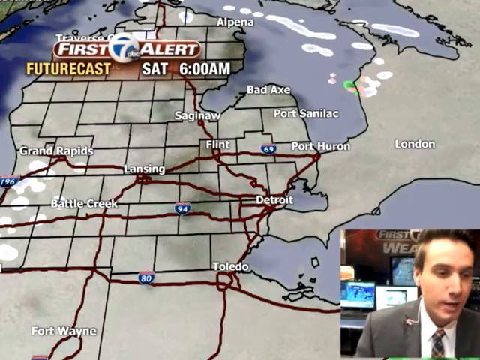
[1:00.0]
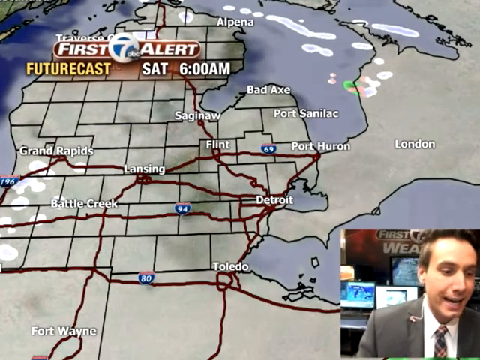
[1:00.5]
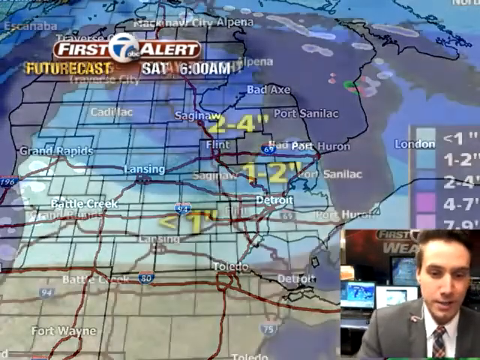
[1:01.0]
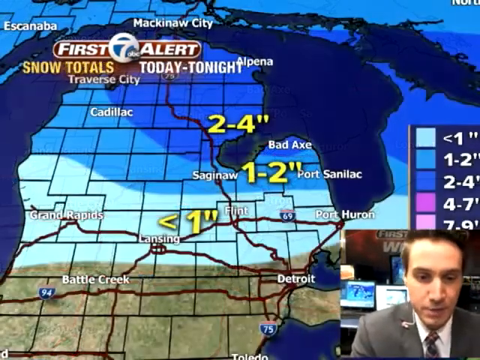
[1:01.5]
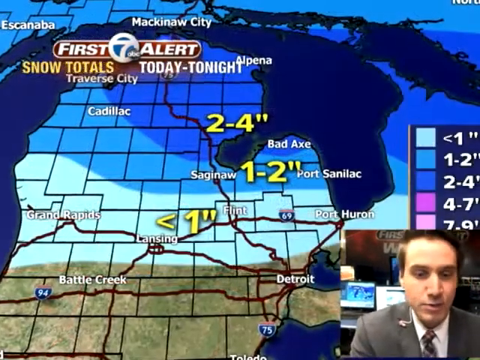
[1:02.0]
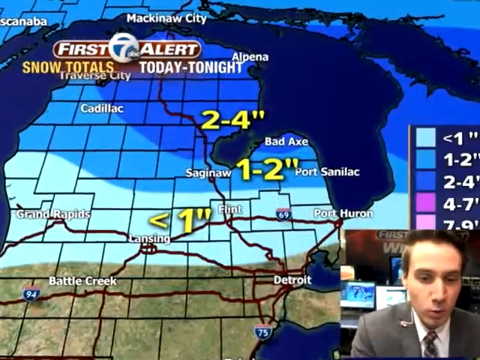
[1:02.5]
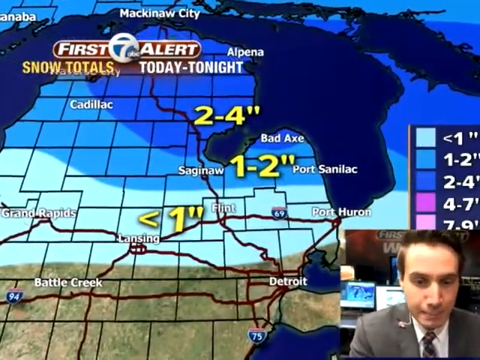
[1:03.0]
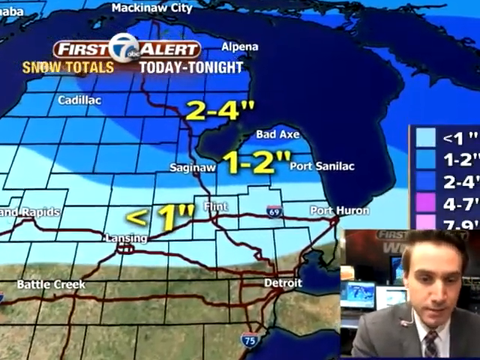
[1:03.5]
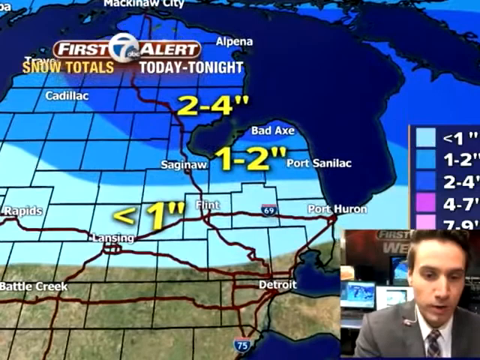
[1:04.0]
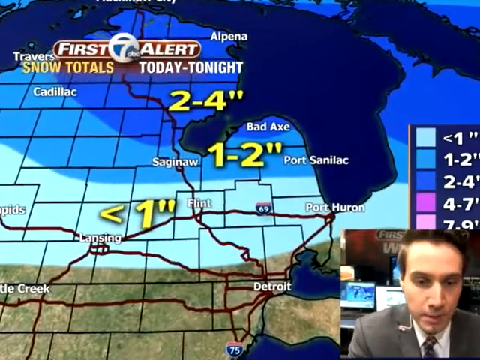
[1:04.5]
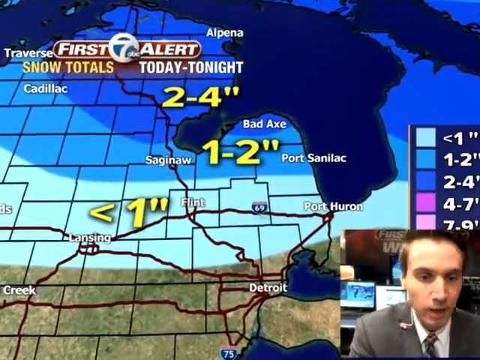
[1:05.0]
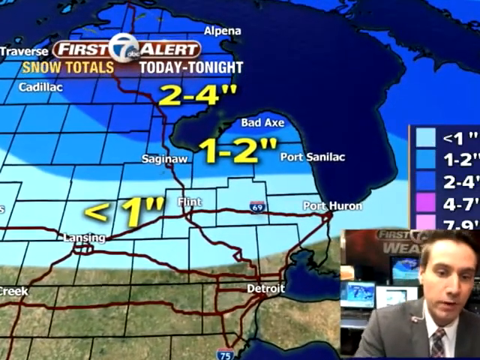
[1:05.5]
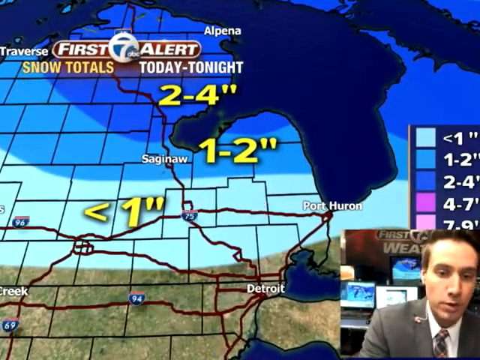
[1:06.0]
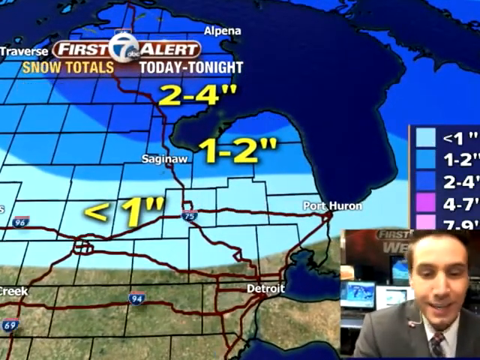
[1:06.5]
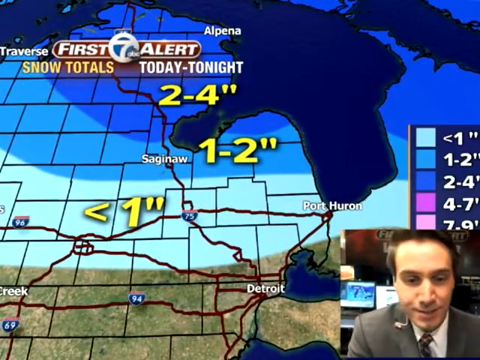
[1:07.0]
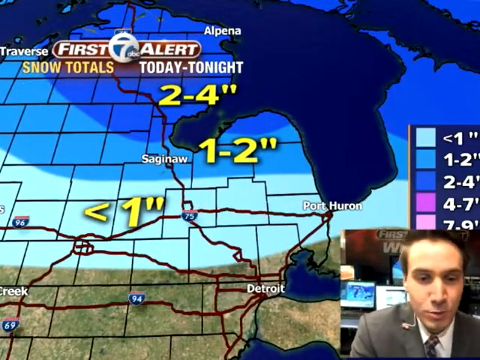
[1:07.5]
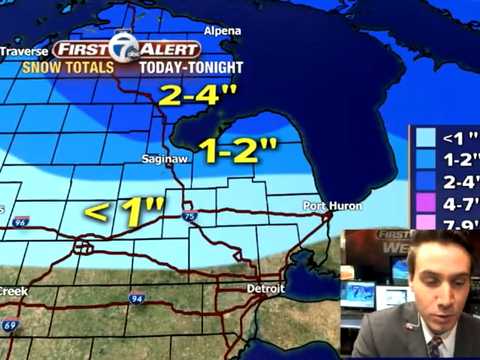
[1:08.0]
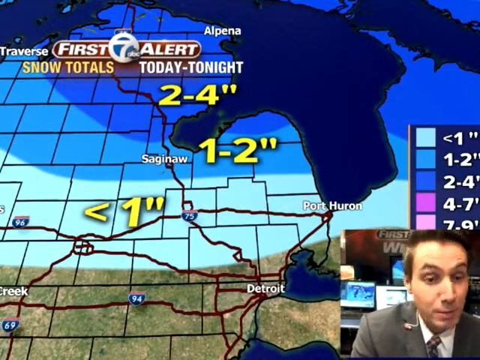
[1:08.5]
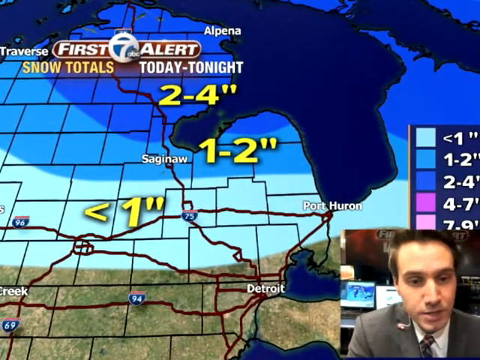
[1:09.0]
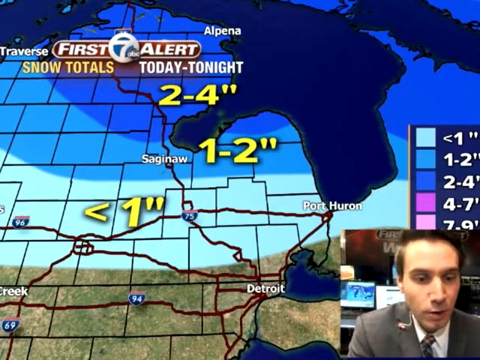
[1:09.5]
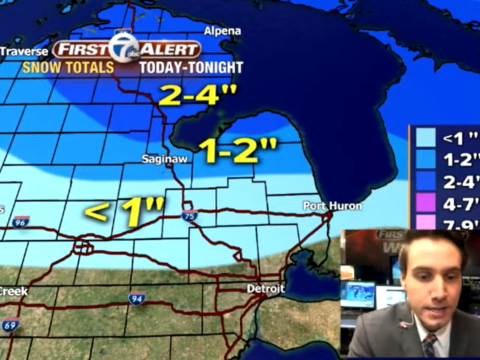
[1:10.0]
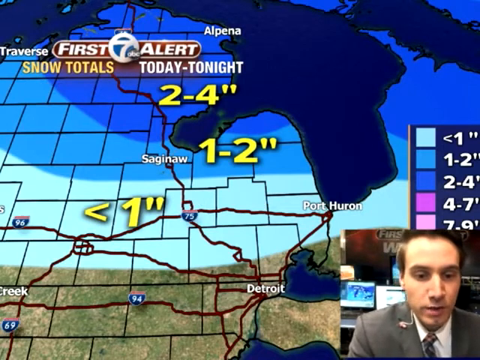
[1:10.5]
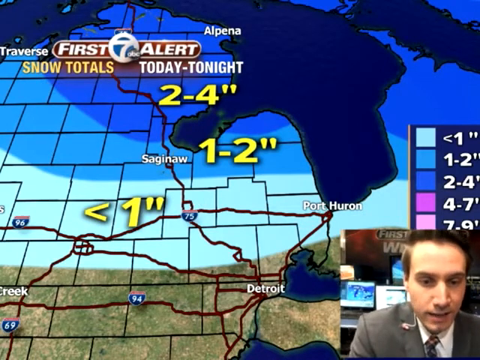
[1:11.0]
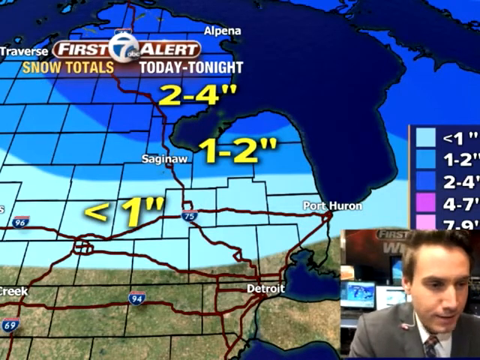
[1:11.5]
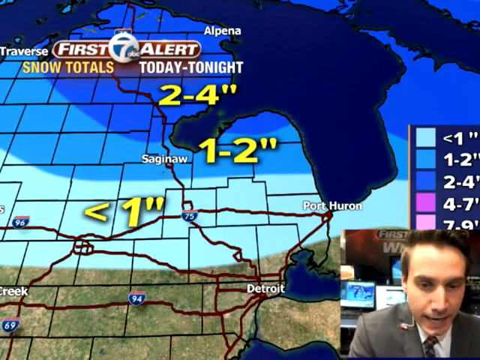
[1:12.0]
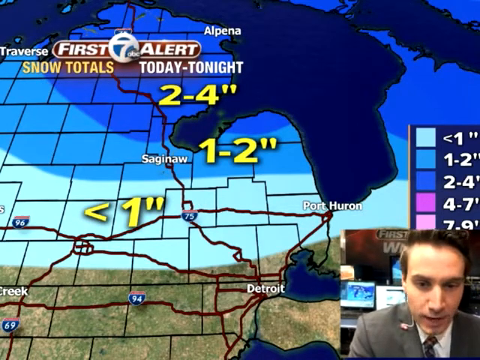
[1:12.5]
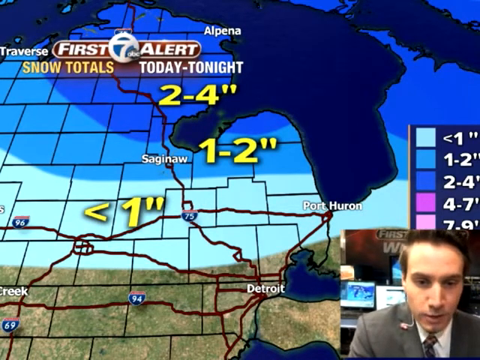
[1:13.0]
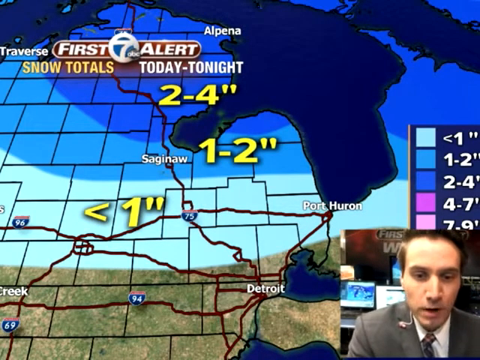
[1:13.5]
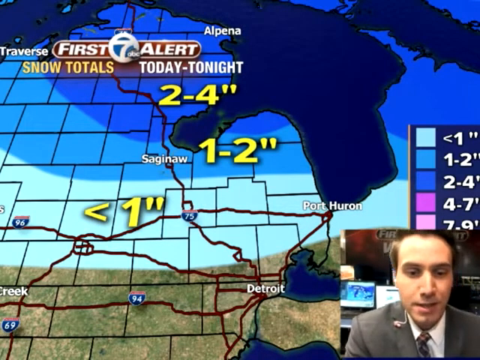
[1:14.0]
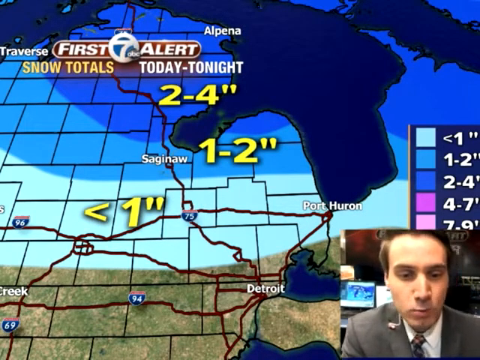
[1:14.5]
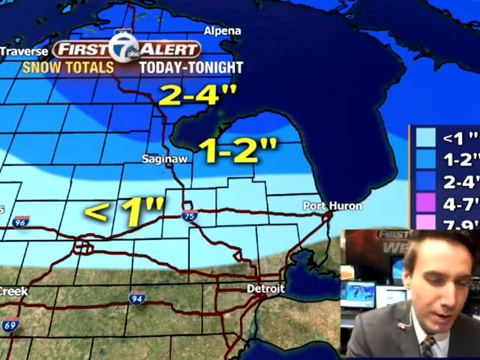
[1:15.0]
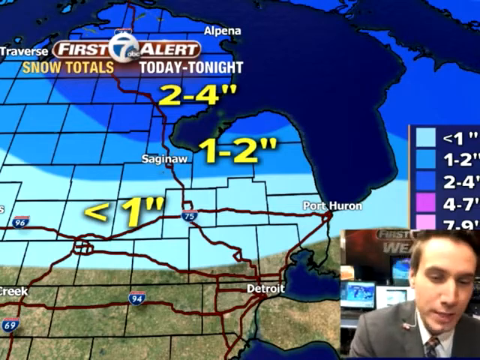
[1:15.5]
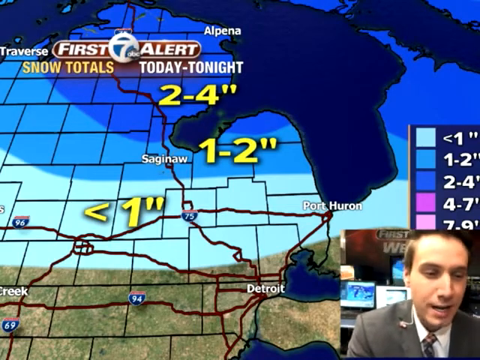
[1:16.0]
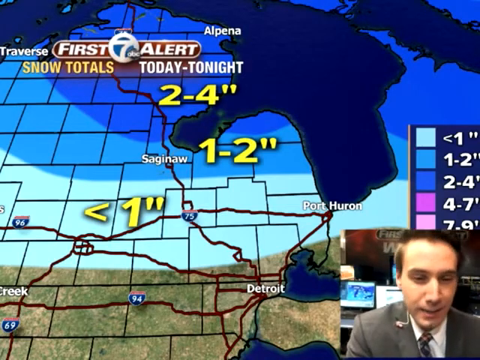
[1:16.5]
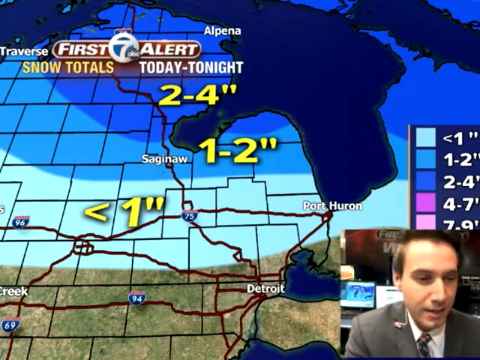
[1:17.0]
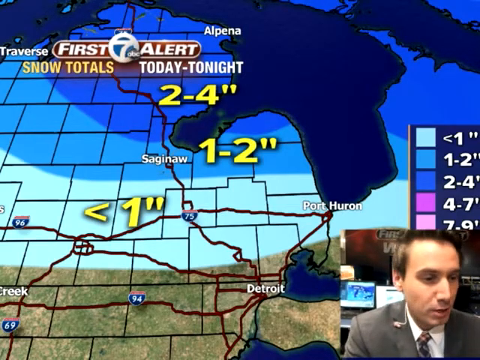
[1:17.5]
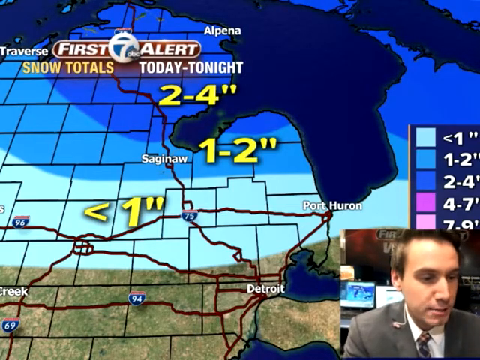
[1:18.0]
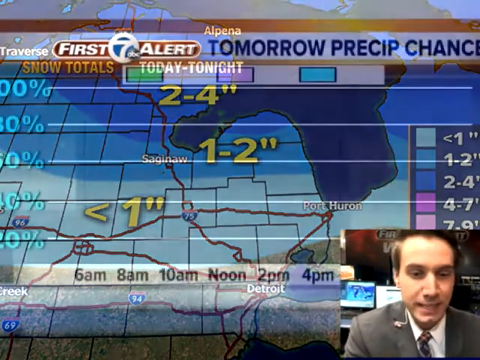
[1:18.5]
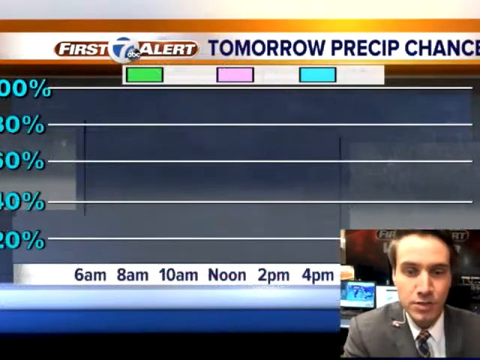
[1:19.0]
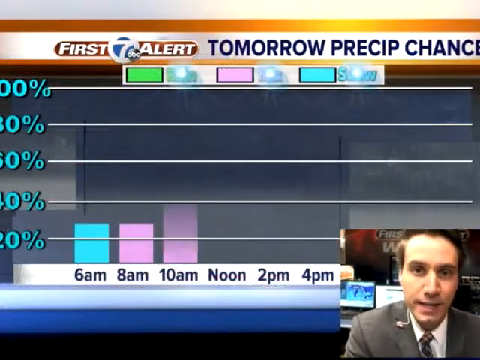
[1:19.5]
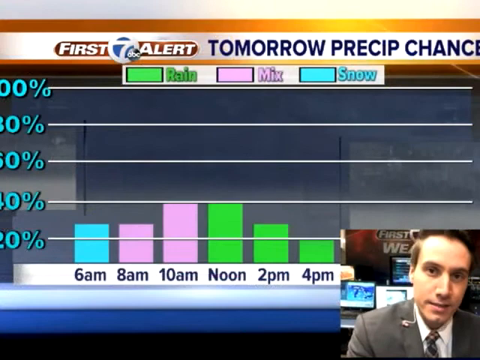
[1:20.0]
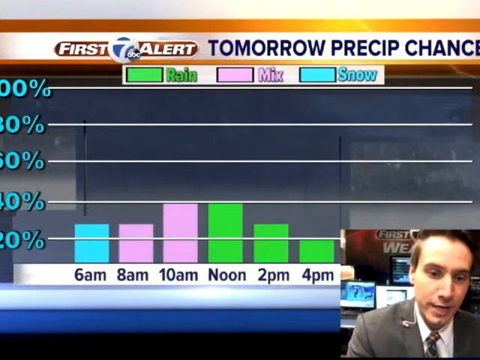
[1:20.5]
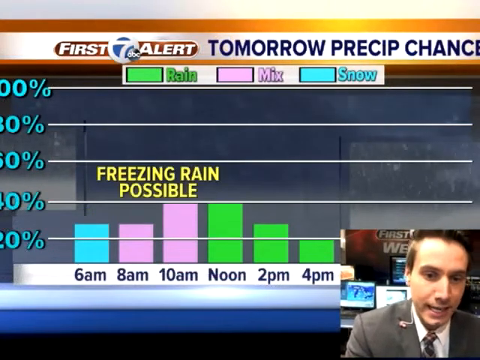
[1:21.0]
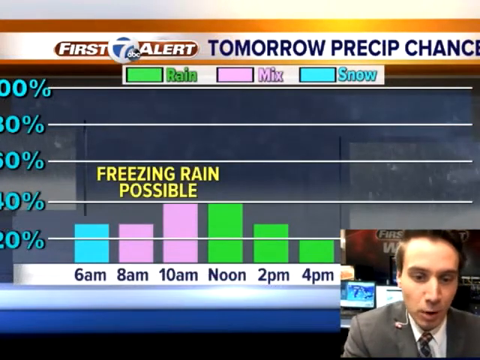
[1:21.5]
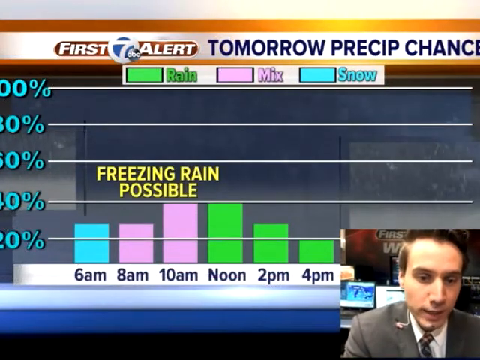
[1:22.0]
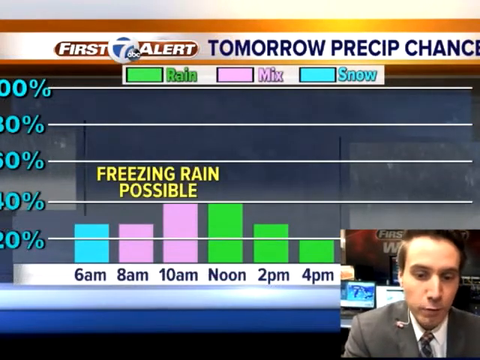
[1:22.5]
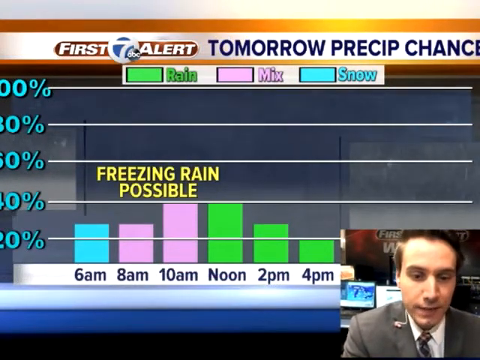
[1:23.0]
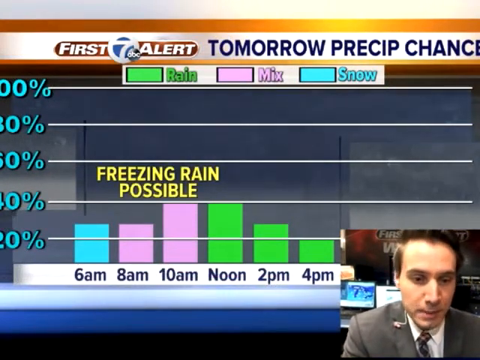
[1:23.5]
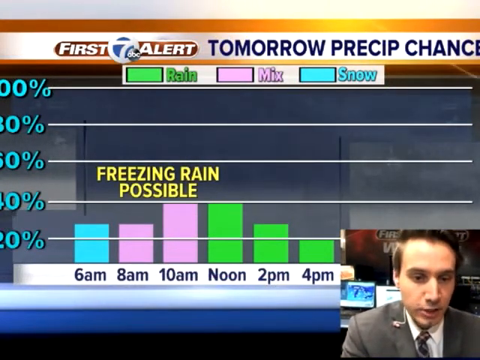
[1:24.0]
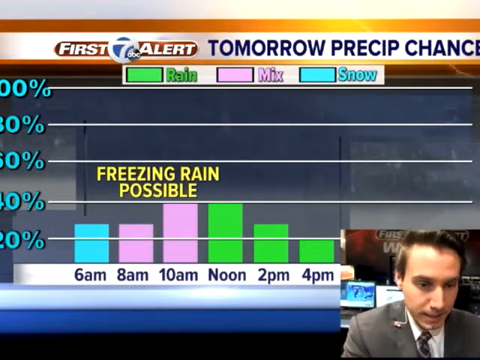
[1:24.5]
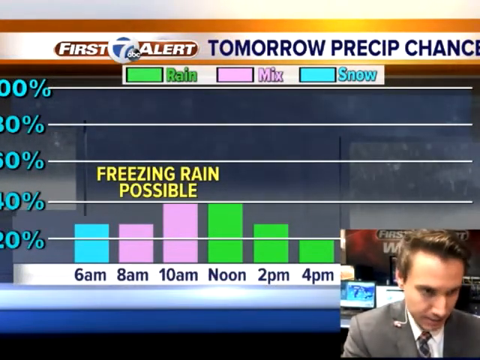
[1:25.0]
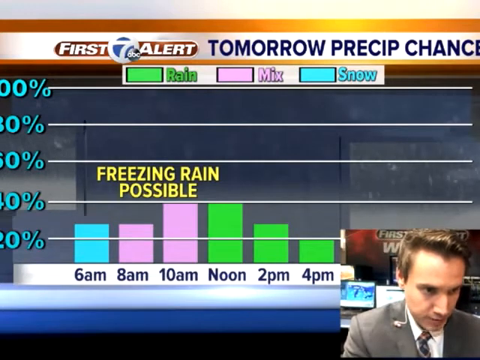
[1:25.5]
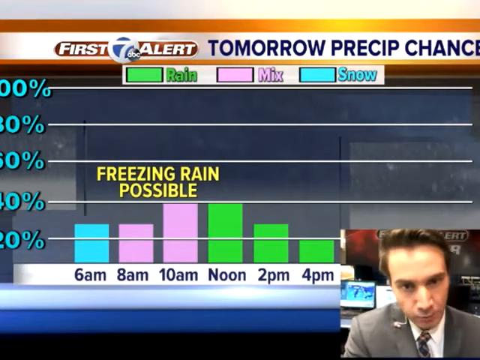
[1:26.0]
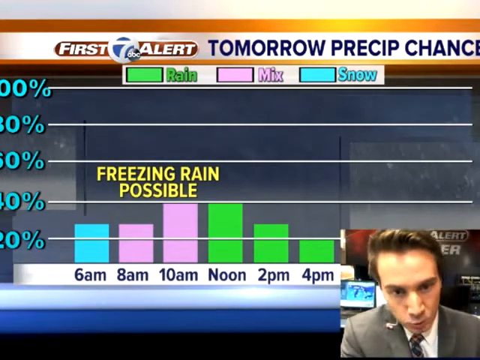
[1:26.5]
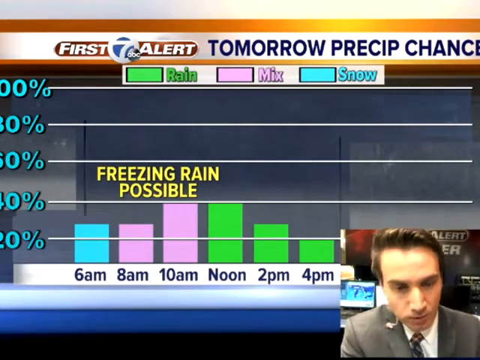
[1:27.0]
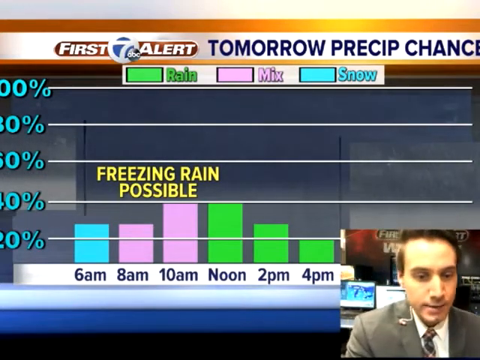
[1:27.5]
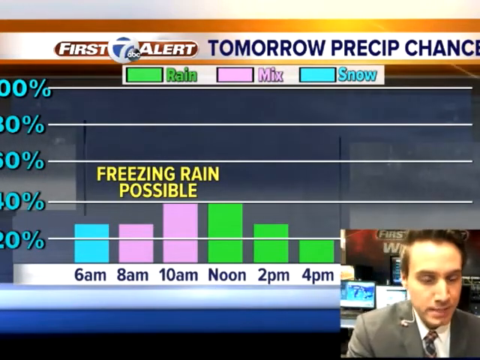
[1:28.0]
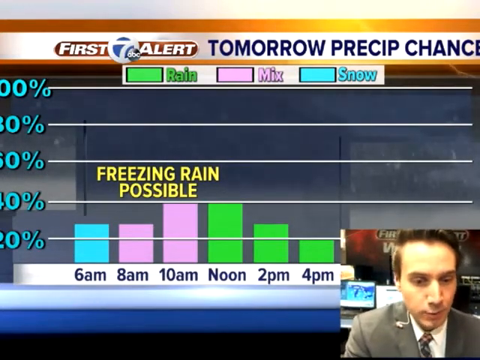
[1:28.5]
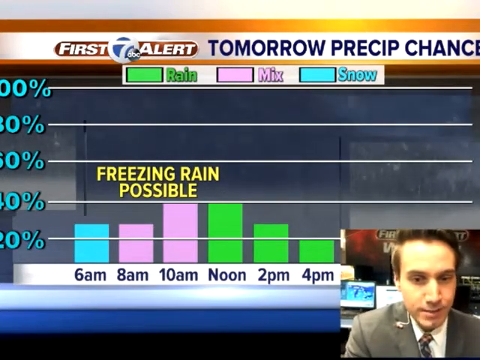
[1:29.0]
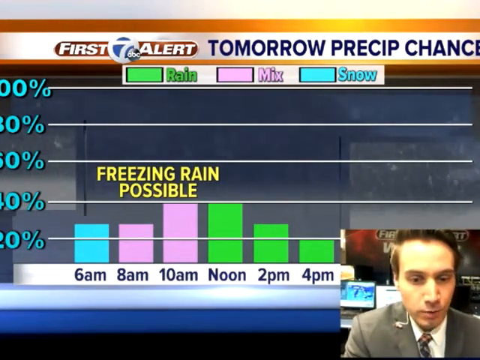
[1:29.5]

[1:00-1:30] The map is clear at first, then changes to blue to show different wind speeds. Near the top, amounts of two to four inches, approximately three inches, are shown. Temperatures seem to be very low. There is apparently a mix of snow shown against a backdrop, with a legend for the chance of rain or freezing rain: rain is indicated by green, along with a mix of rain and snow, and snow is indicated by pink and by red. The chance of snow is between 30 and 40%, maybe 30%, and the mix of rain and snow is also between 30 and 40%. Okinawa and Tokyo each show a 40% chance. Behind the man, there is snow.